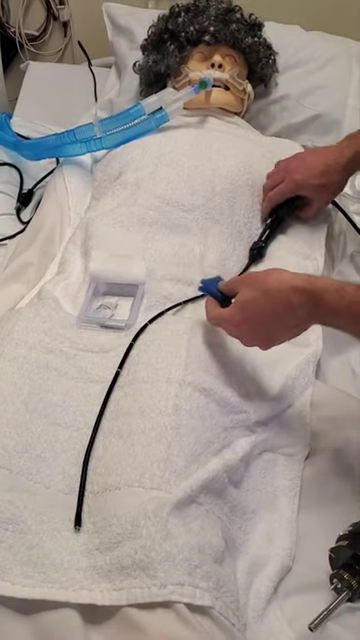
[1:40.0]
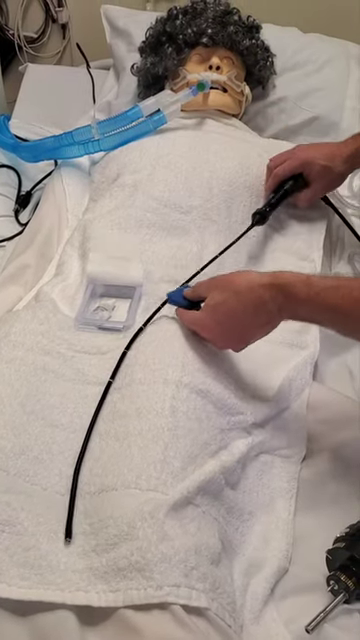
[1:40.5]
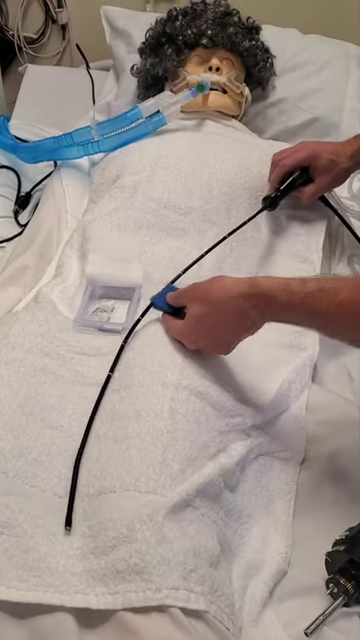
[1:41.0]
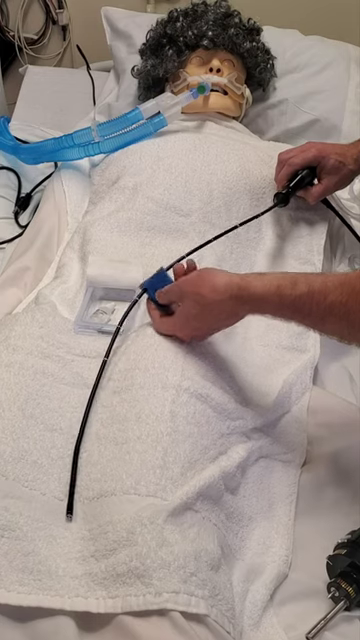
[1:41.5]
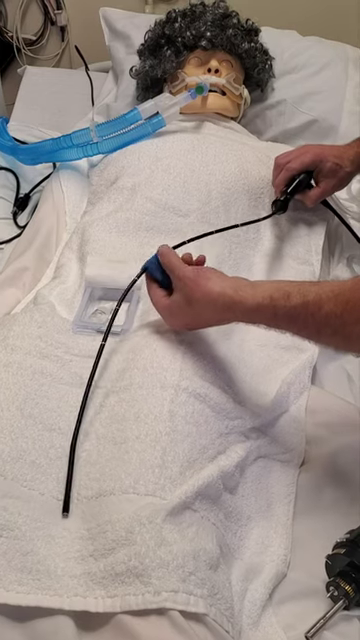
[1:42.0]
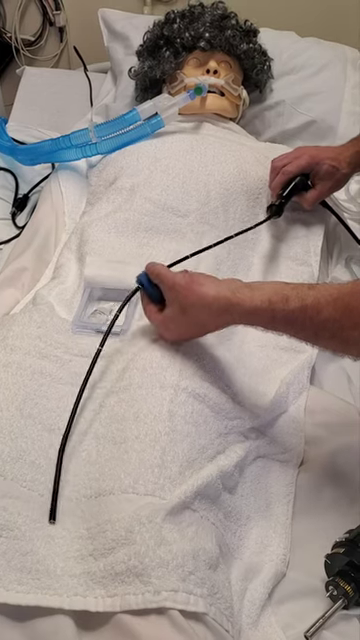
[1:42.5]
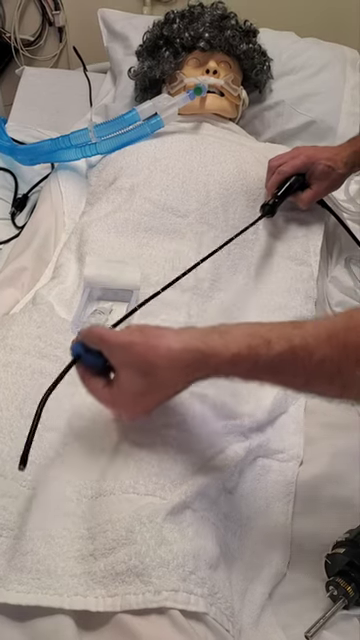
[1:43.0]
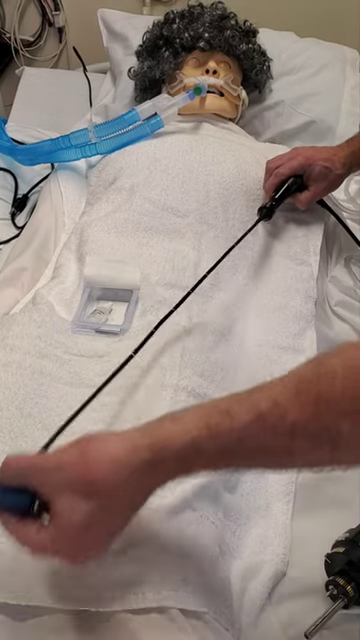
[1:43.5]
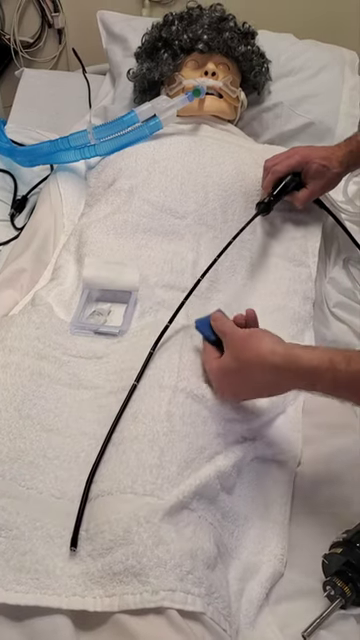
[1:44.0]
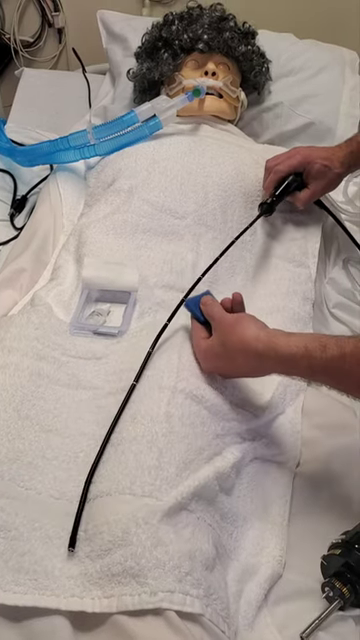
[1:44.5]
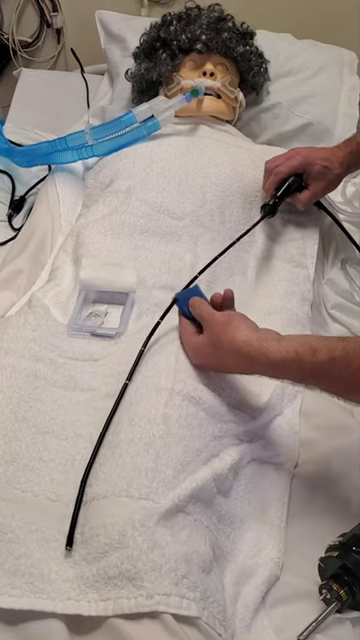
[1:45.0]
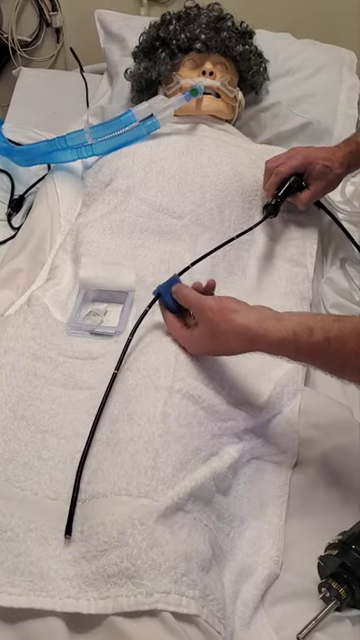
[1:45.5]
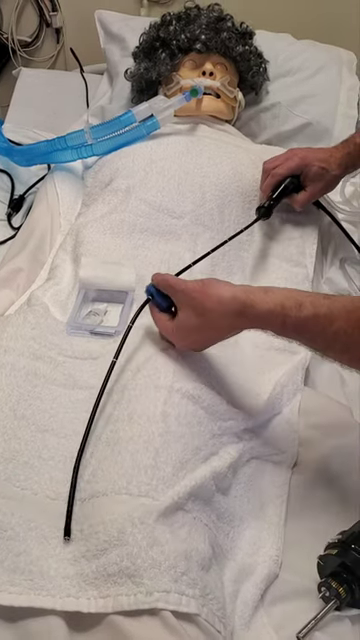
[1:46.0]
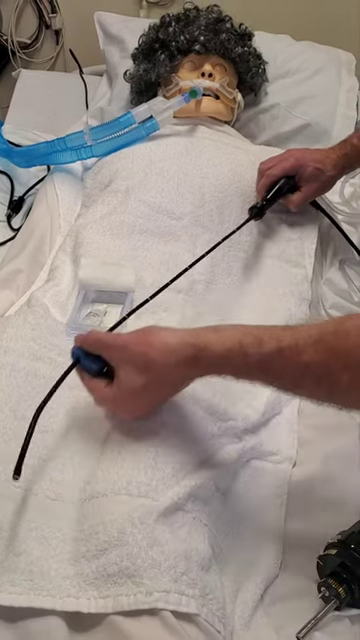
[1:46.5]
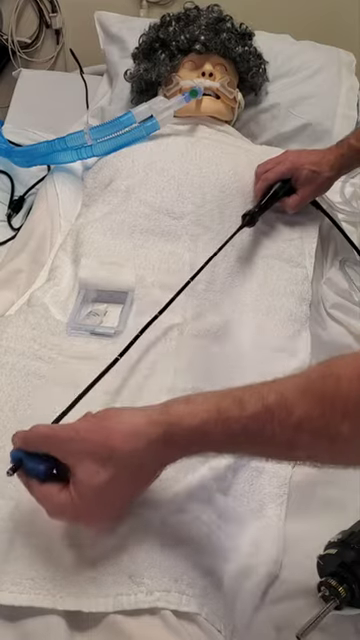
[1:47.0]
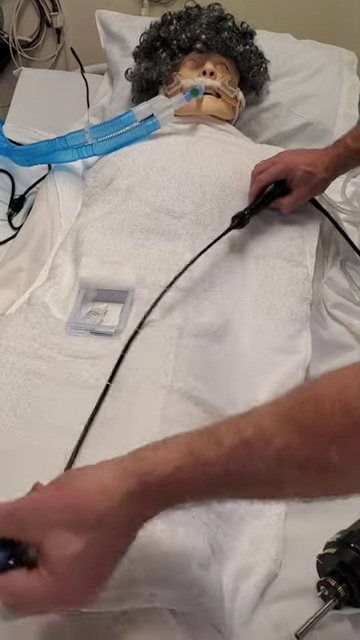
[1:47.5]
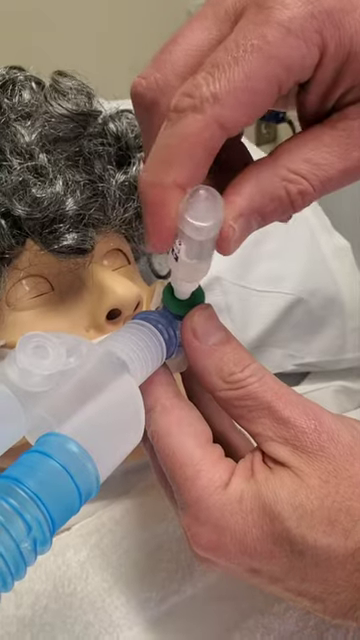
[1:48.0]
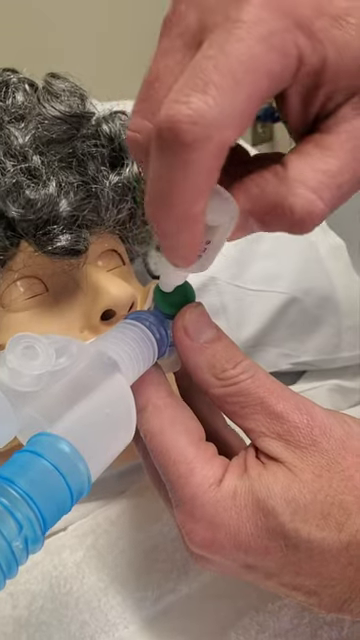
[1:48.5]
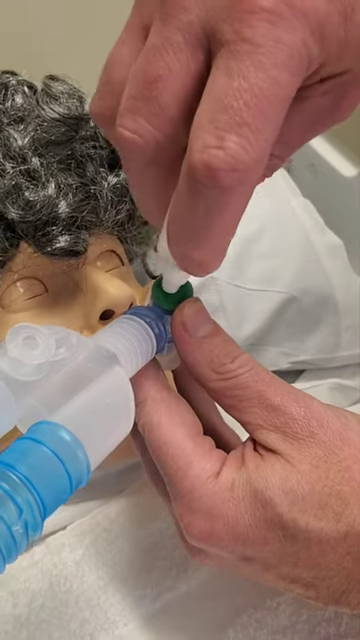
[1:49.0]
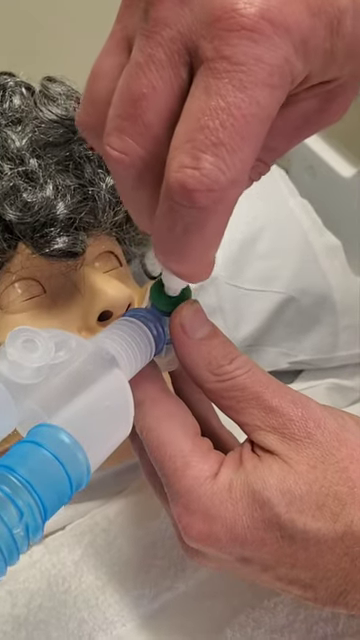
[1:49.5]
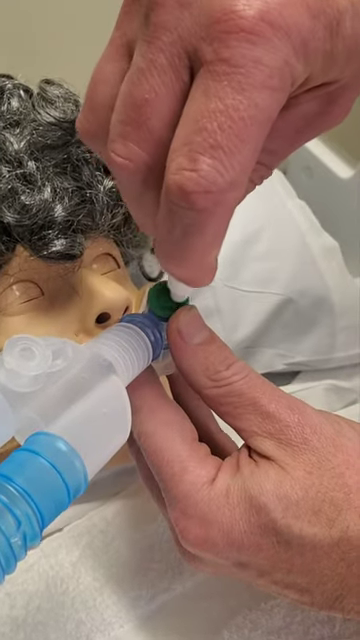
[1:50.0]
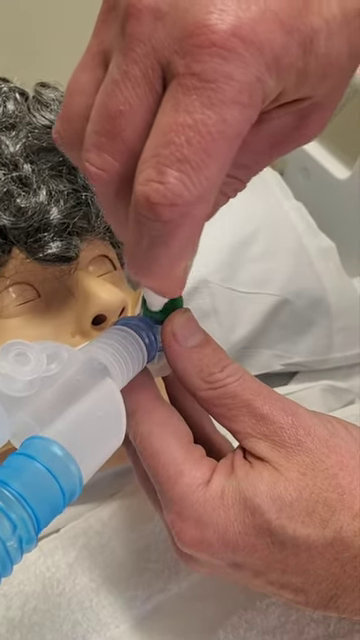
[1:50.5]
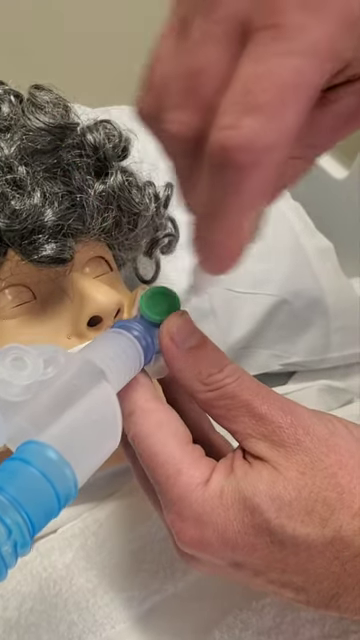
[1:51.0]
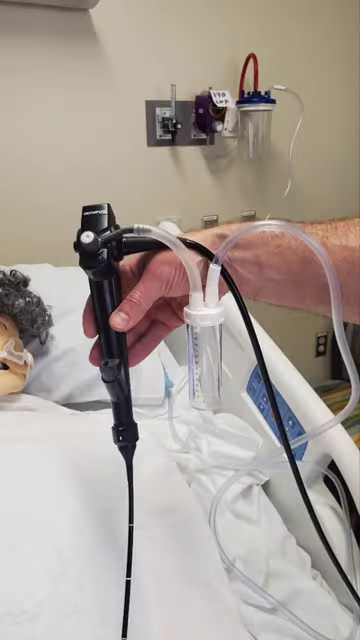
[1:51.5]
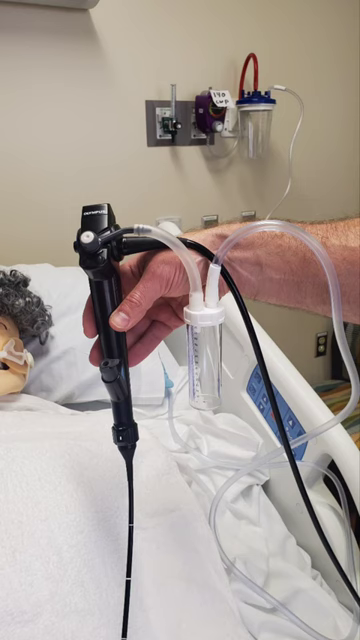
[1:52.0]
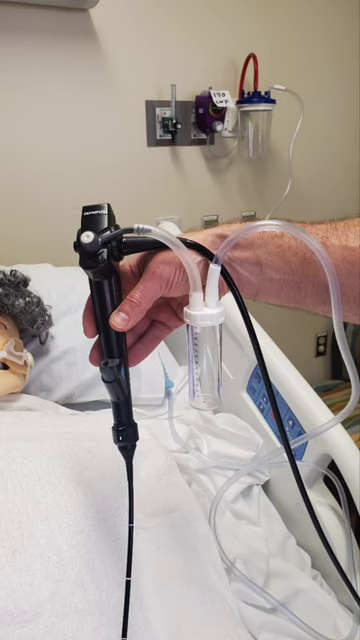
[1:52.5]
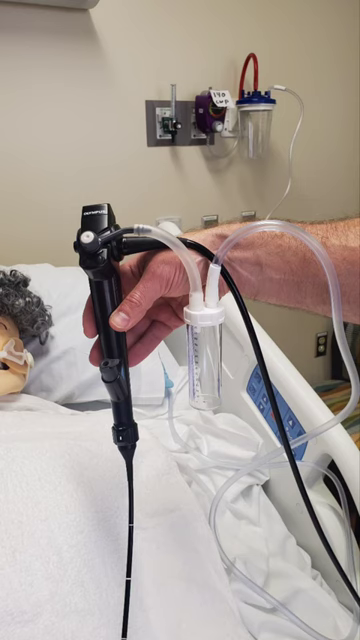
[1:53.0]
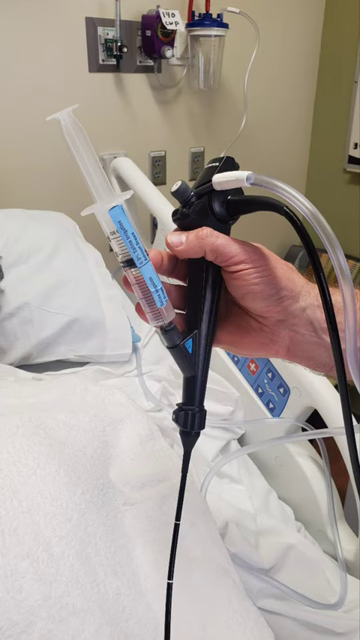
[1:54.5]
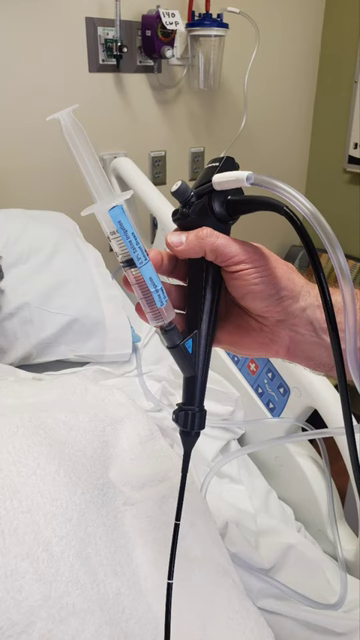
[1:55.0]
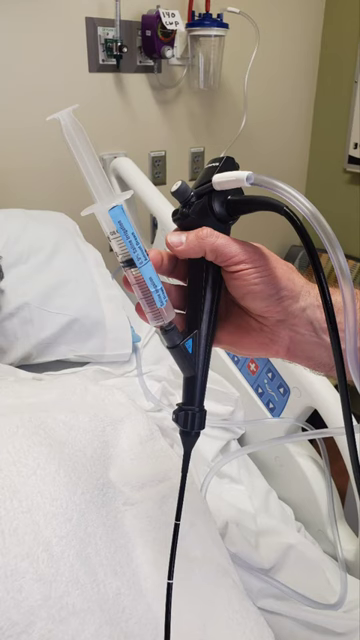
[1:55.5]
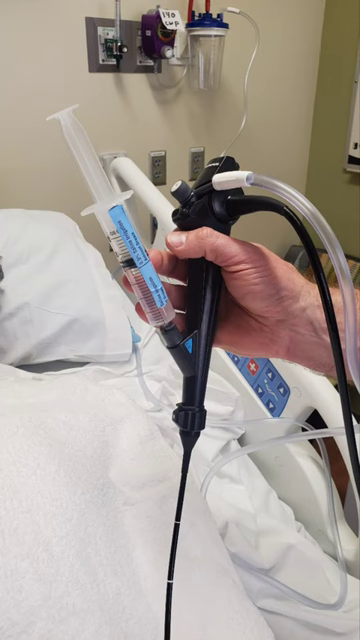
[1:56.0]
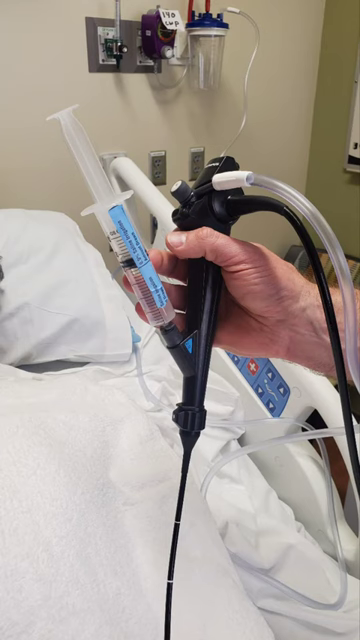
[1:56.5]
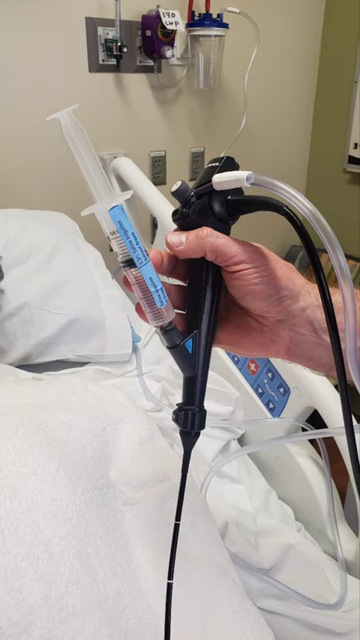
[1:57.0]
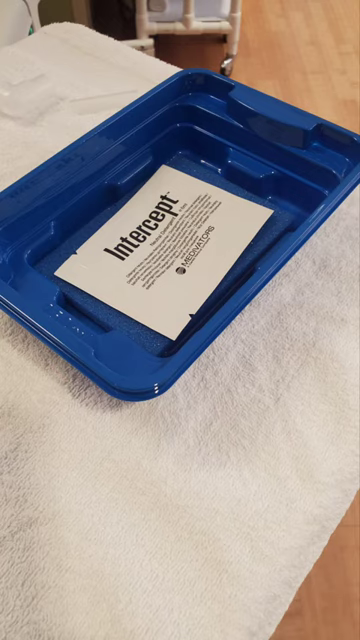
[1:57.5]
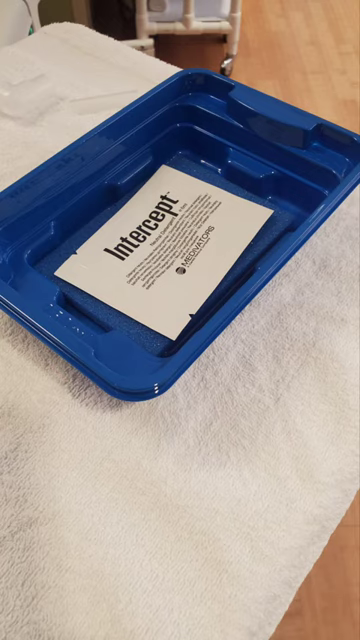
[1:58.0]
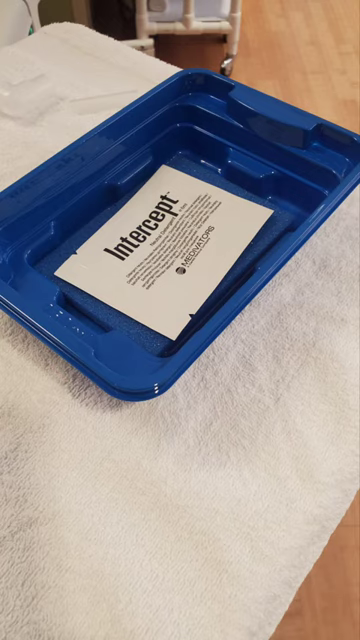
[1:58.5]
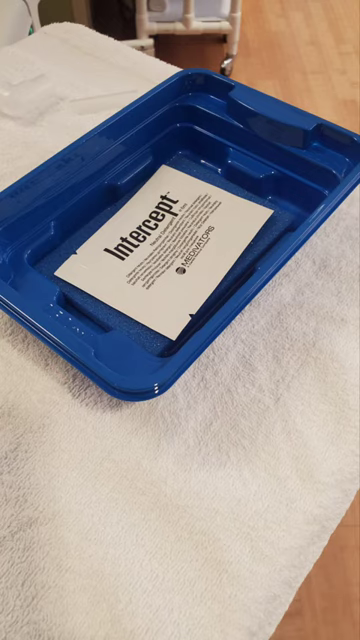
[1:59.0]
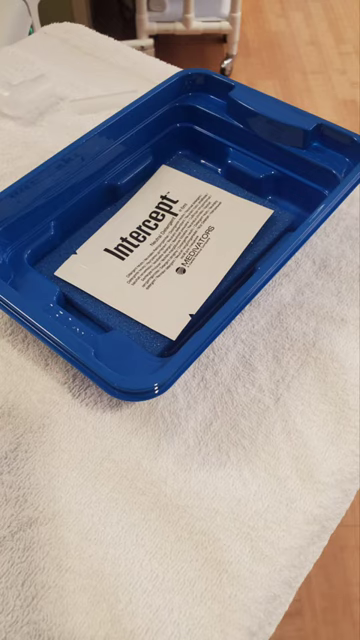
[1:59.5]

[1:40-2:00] Someone is possibly cleaning or lubricating the cord of the long camera, which may be inserted into the mannequin, using something blue that is folded. They then use a dropper to pour some type of solution onto the port through which the camera would be inserted into the hose in the mannequin's mouth. The video transitions to a view of how the device is held in a hand, along with a syringe, possibly to clean out particles around the camera as it is inserted. The shot ends zoomed in on a tray holding some type of paper that says "intercept" in black print, with other small text below it that is hard to read.